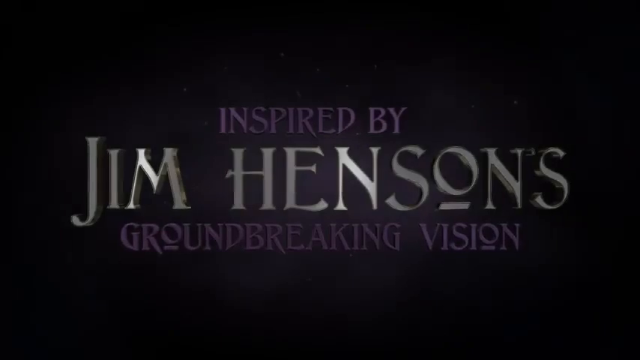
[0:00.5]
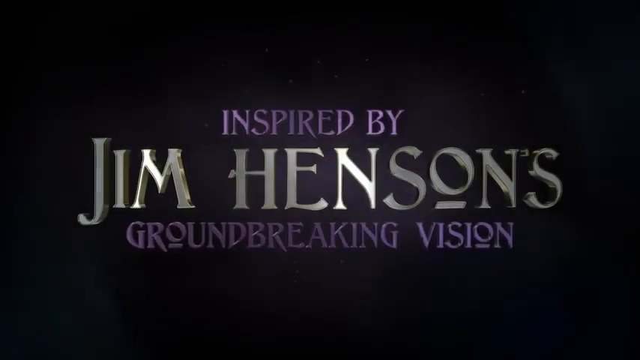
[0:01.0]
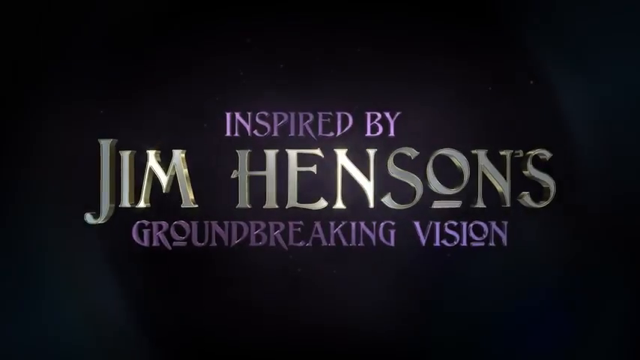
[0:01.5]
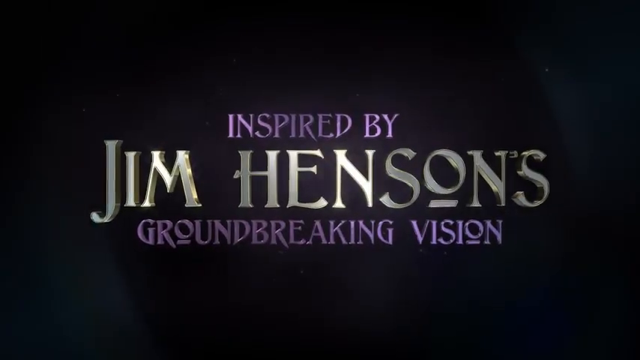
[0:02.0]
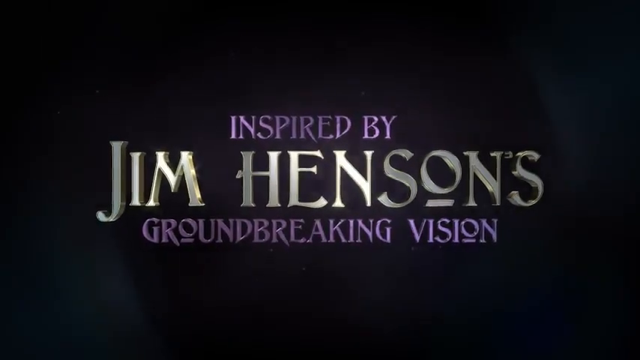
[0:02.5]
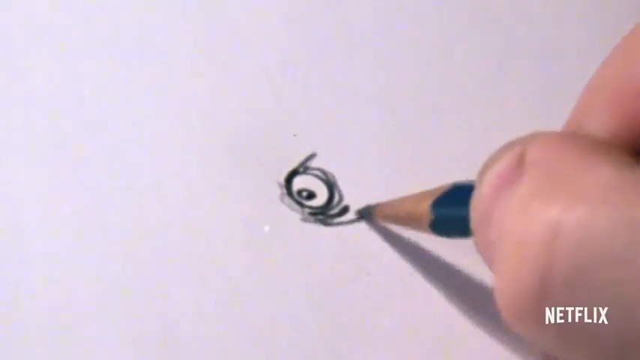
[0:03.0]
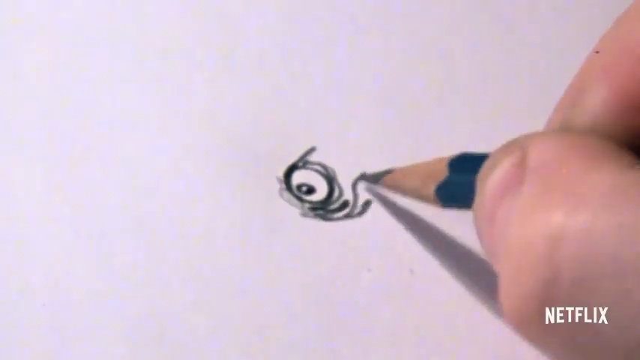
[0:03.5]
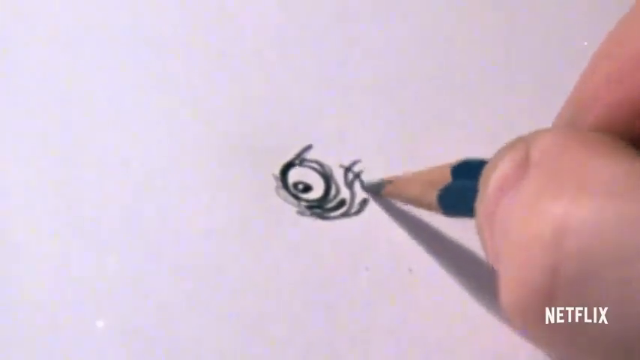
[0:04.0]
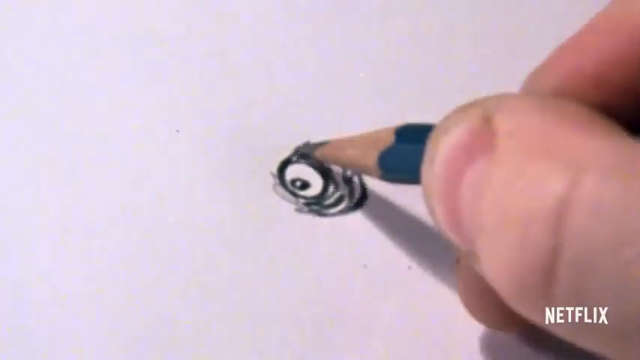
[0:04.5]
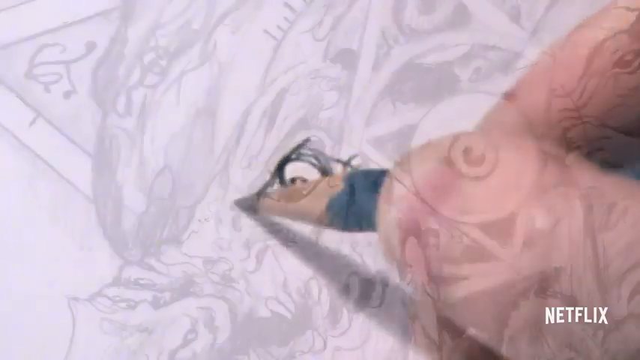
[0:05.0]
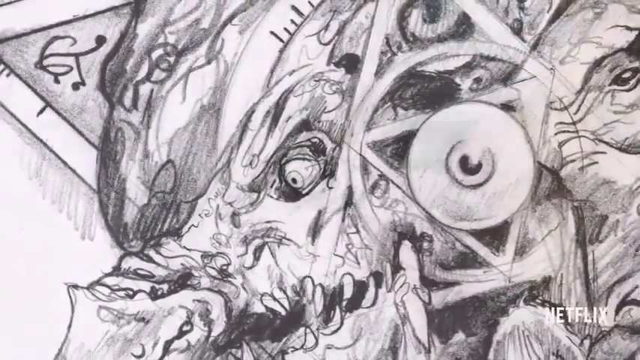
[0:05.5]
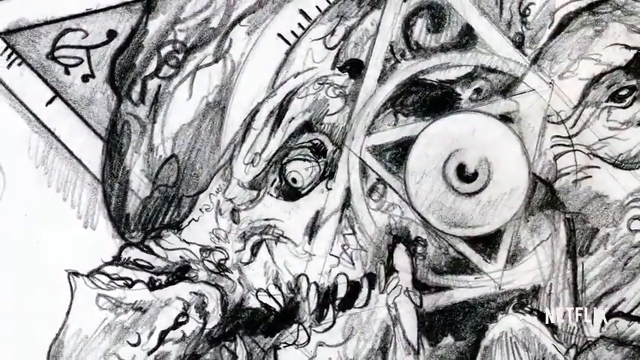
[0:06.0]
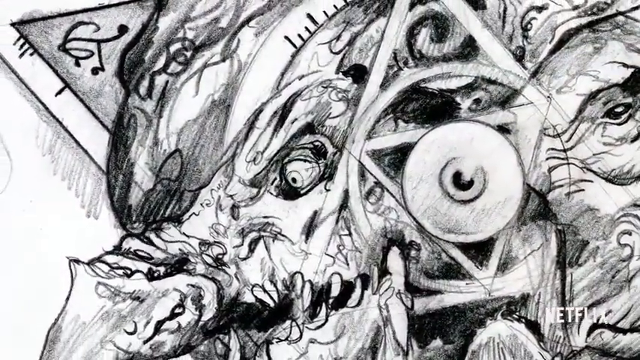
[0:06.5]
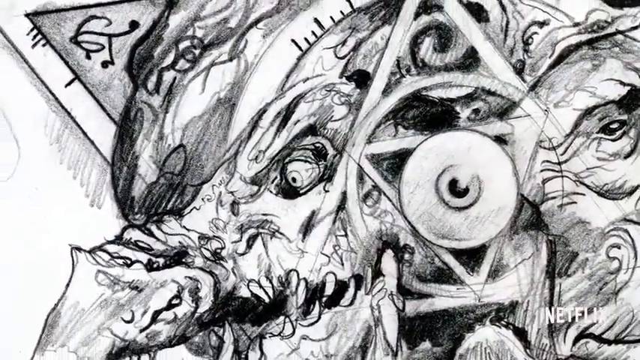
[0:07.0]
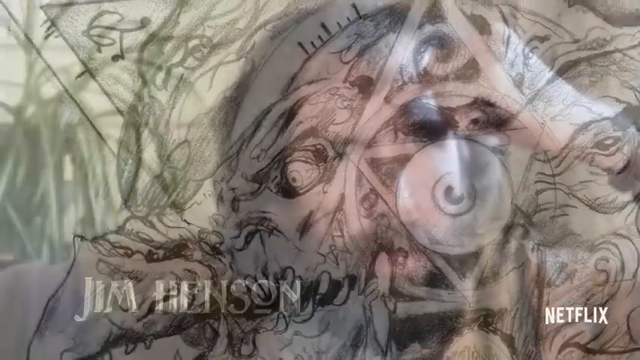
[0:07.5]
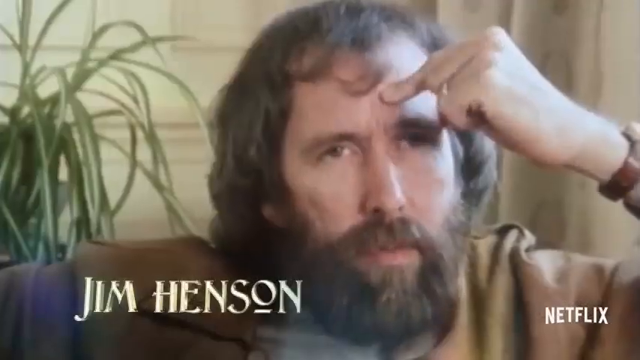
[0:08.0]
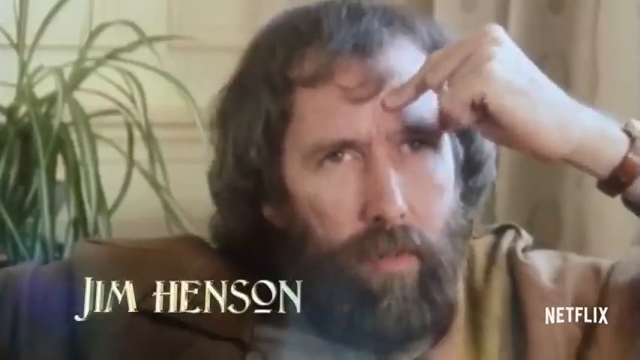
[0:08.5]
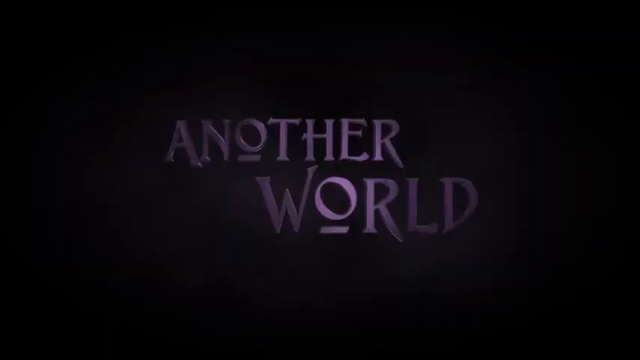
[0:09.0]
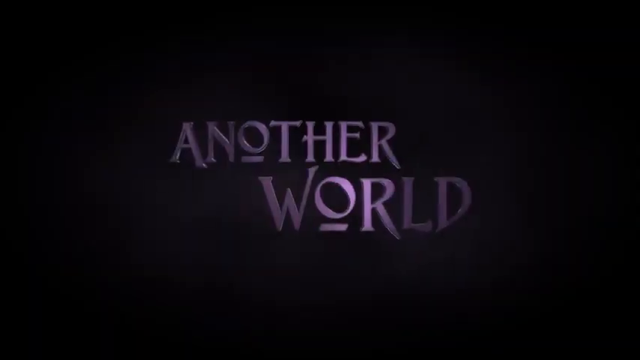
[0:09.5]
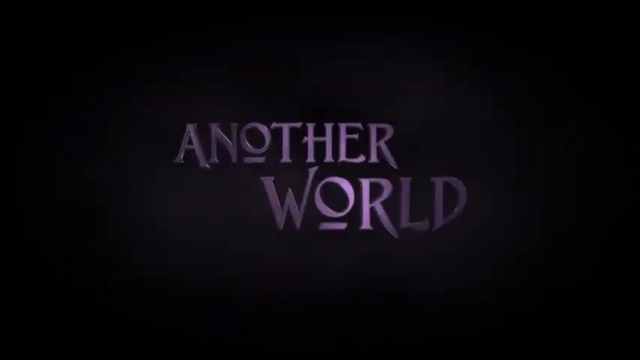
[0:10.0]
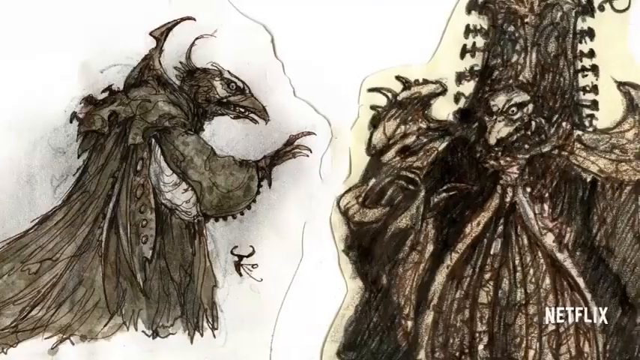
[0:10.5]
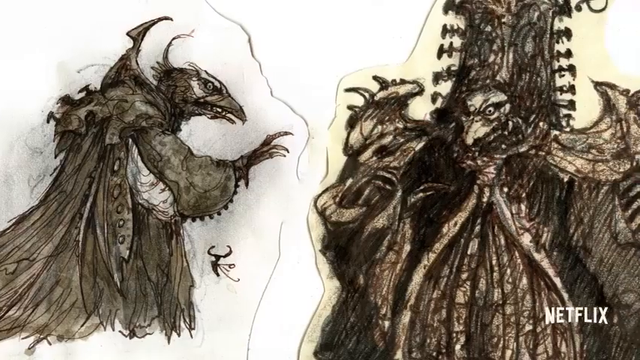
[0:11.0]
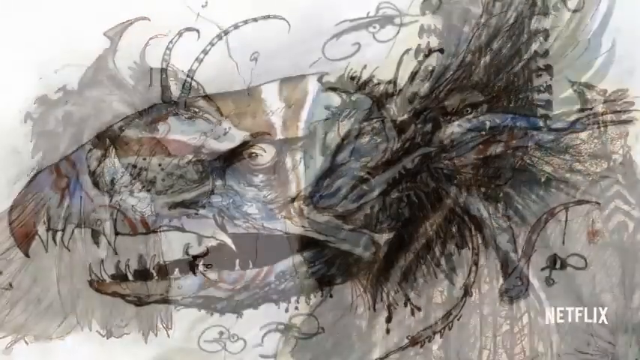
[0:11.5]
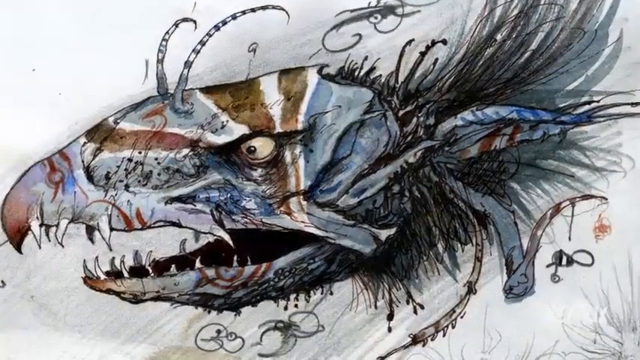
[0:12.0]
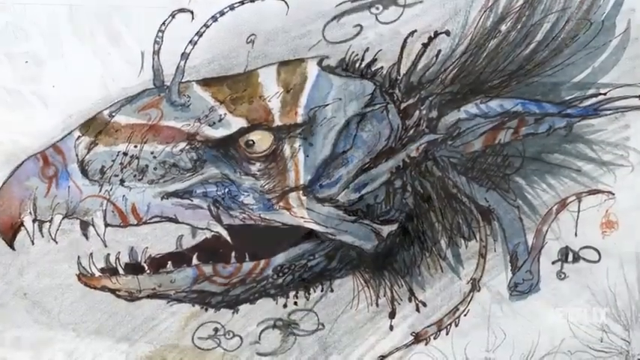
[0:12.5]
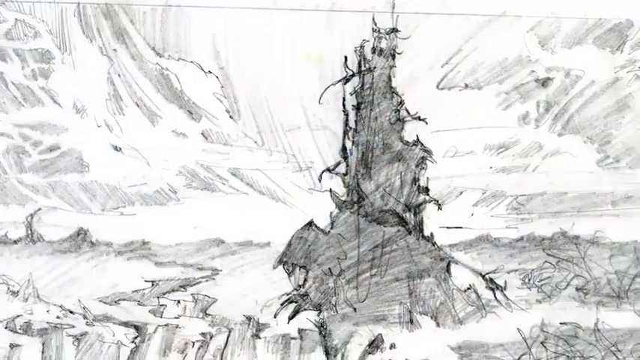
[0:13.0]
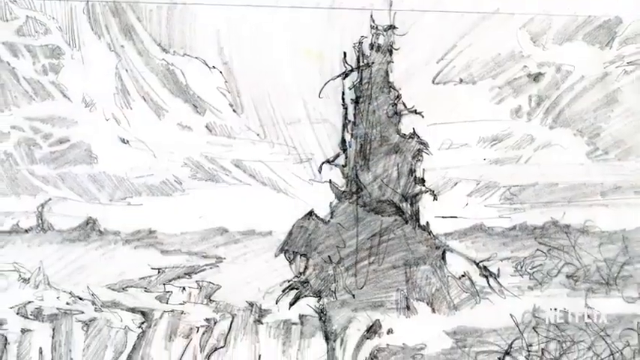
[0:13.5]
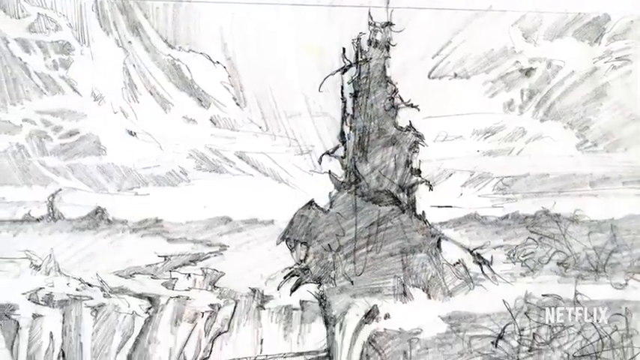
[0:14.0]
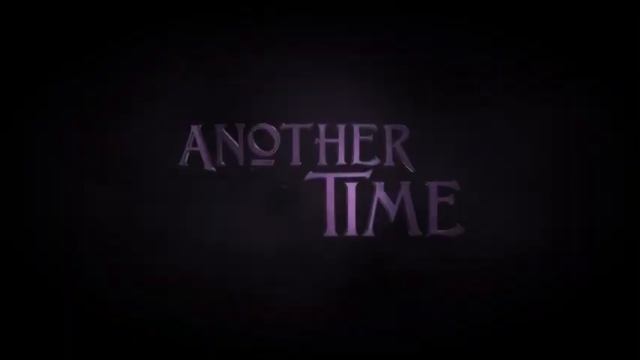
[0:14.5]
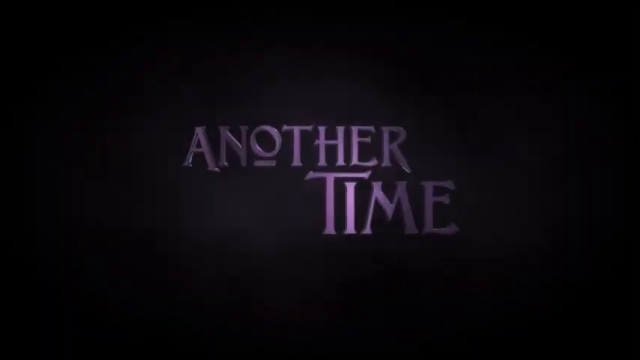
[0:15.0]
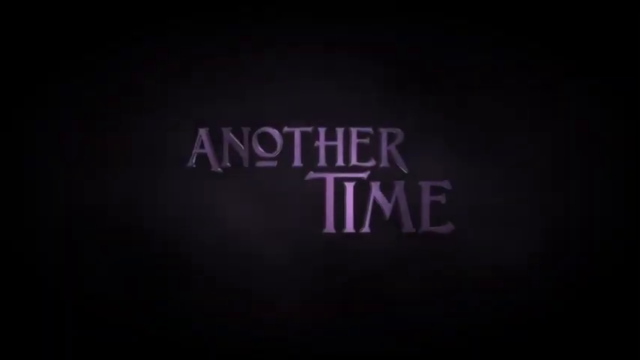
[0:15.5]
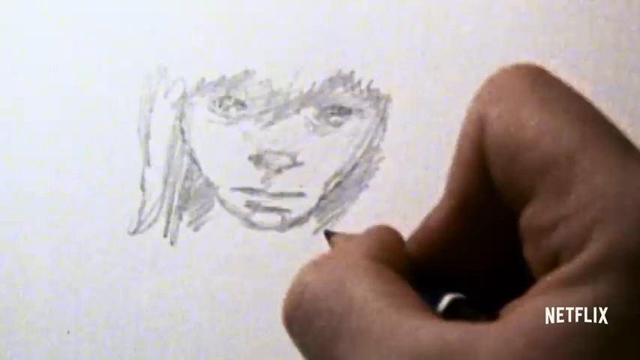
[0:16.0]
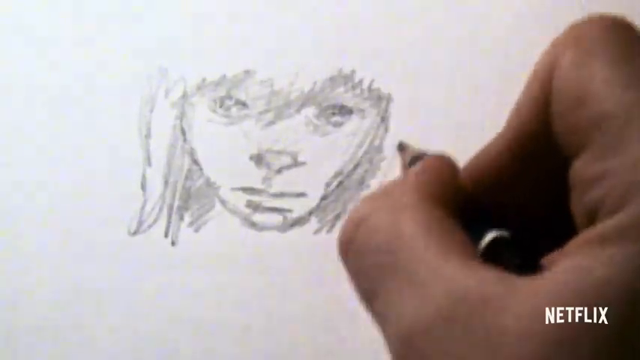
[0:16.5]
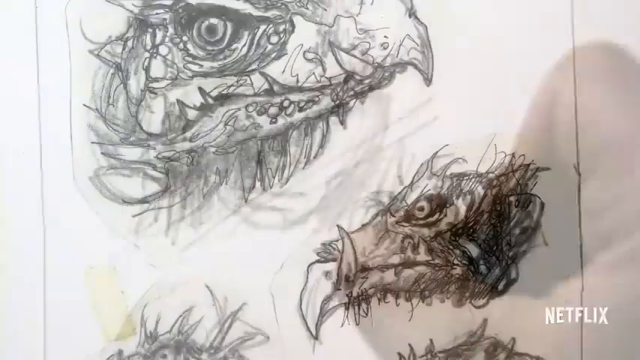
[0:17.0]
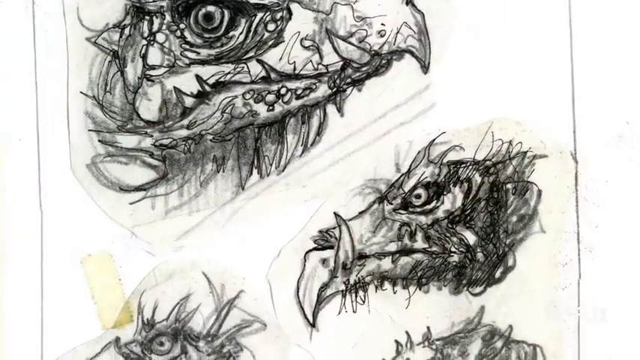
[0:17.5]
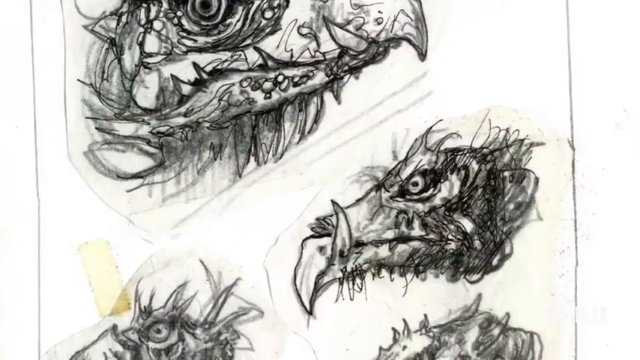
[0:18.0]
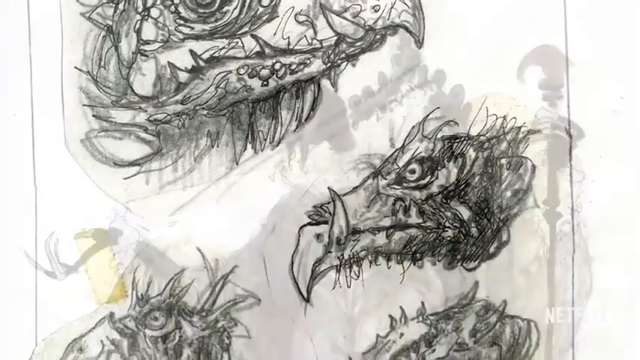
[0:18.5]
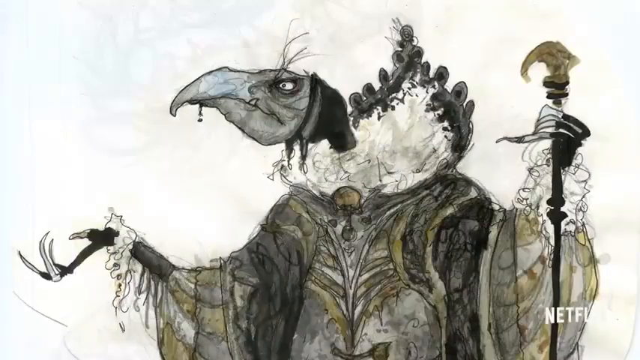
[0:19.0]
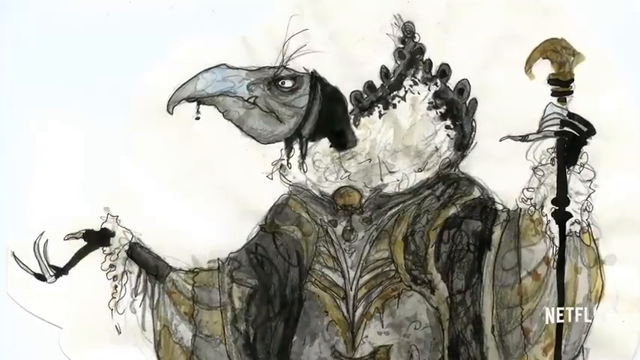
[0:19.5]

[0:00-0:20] A black screen shows purple and silver goldish text reading "inspired by Jim Henson's groundbreaking vision." A person's hand draws a character on a piece of paper, and a small Netflix logo is in the bottom right corner. The completed drawing shows an eyeball with multiple eyeballs around it. Footage of Jim Henson follows, with text showing his name; there is a plant behind him and he has his hand on his face. A black background with purple text reads "another world." Drawings of birds on a piece of paper appear, along with another very creative drawing of a bird in red and blue colors. What looks to be a boat or some kind of monster is shown with water and mountains surrounding it. Another black background with purple text reads "another time." A hand draws a person's face with its hair, followed by some birds and a human bird.